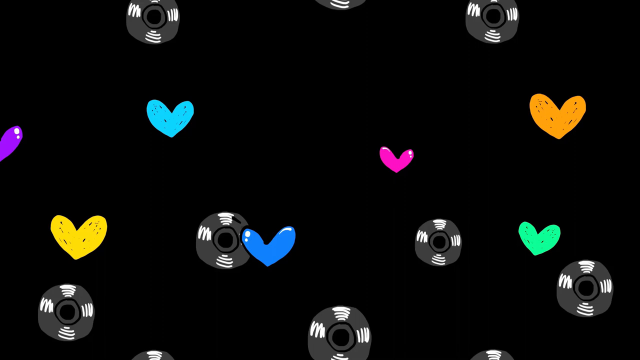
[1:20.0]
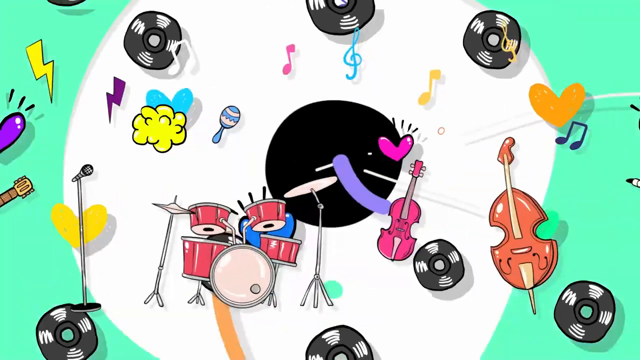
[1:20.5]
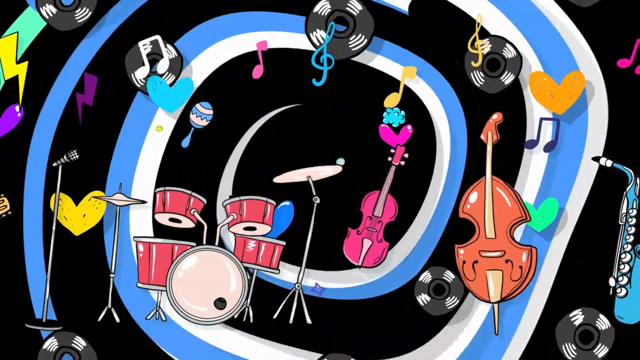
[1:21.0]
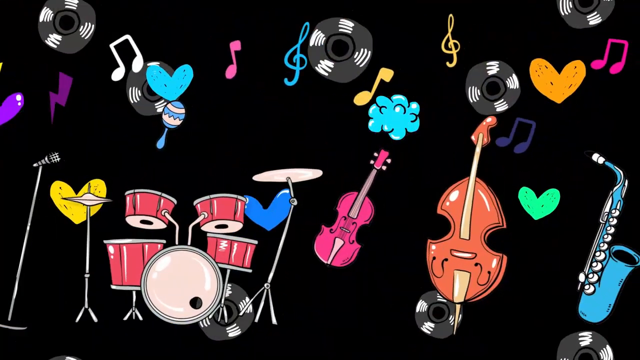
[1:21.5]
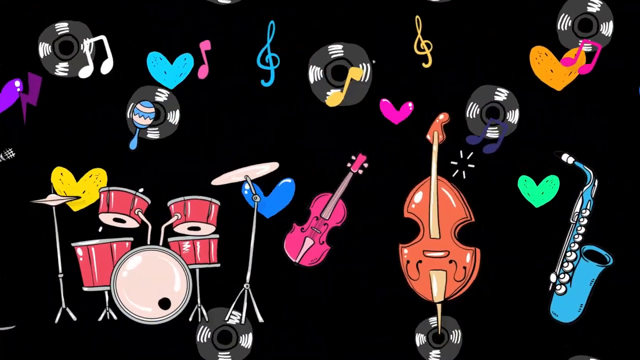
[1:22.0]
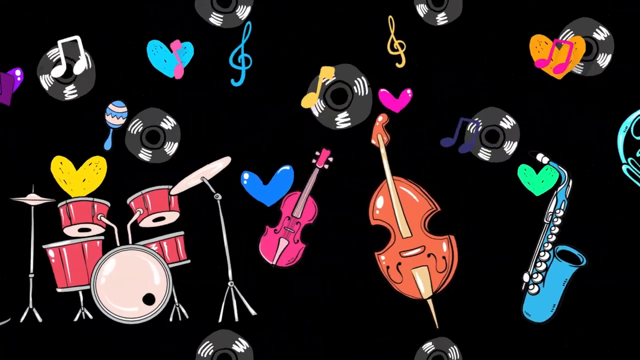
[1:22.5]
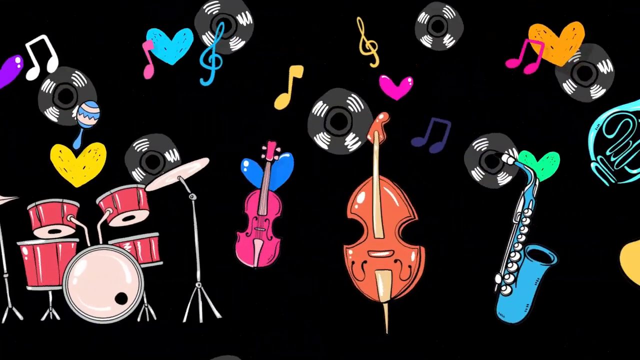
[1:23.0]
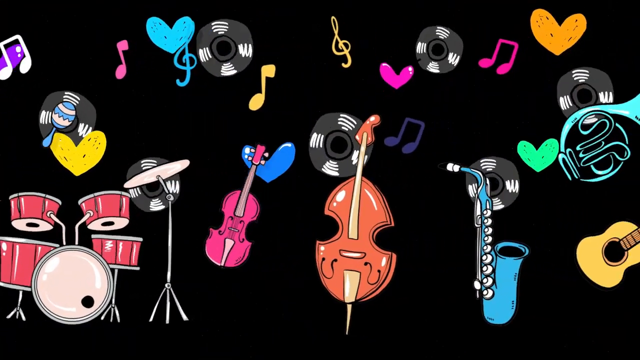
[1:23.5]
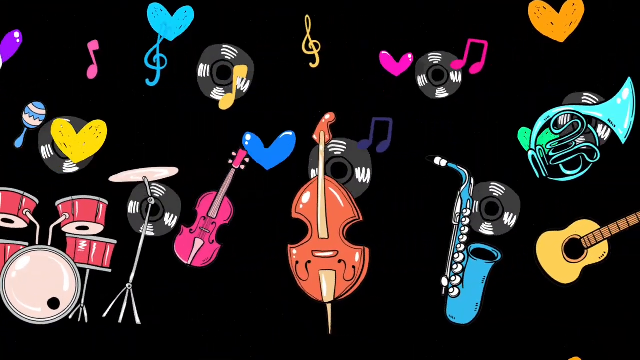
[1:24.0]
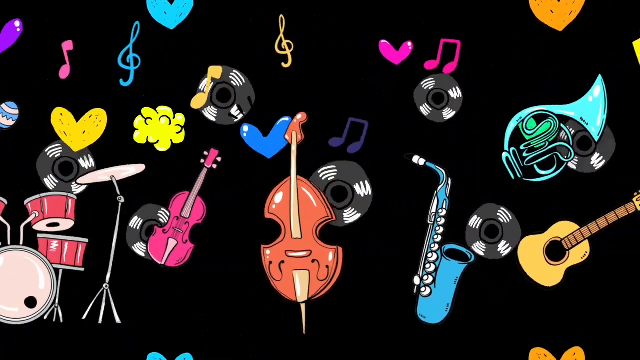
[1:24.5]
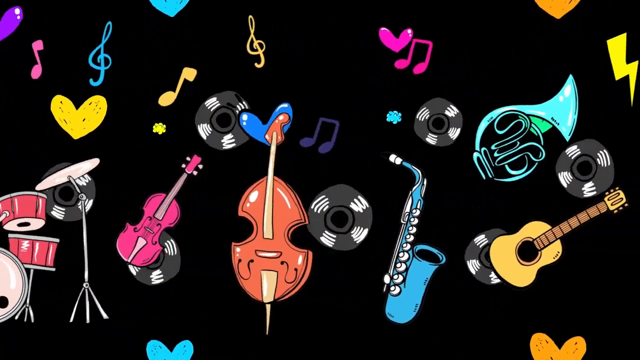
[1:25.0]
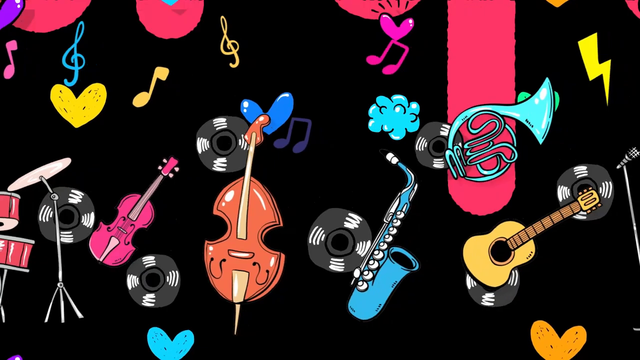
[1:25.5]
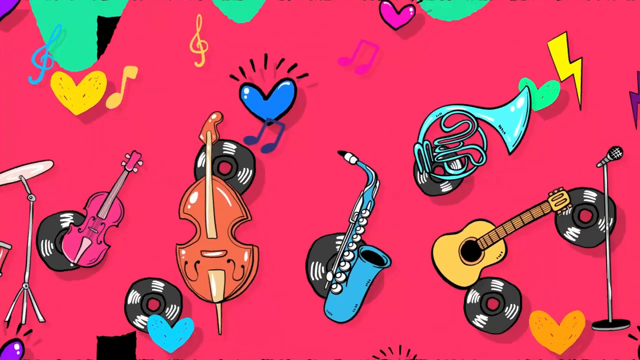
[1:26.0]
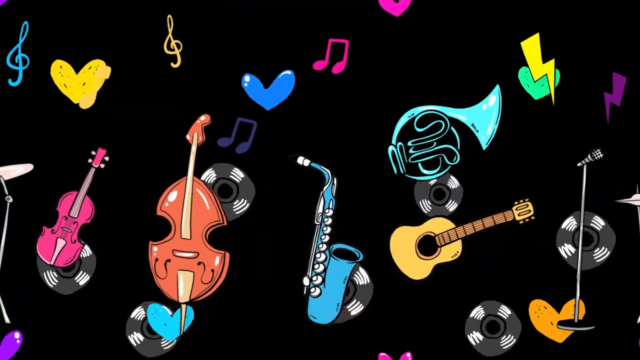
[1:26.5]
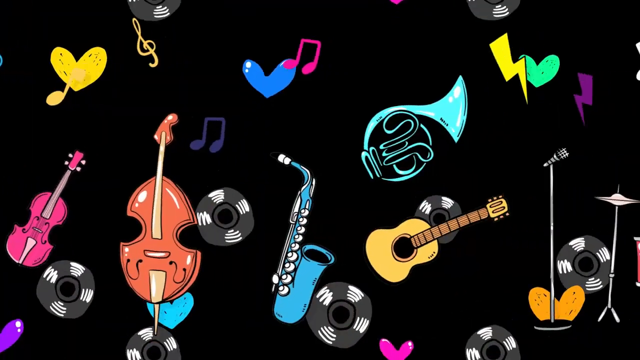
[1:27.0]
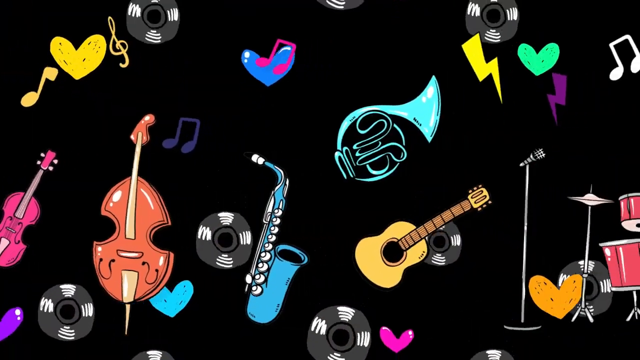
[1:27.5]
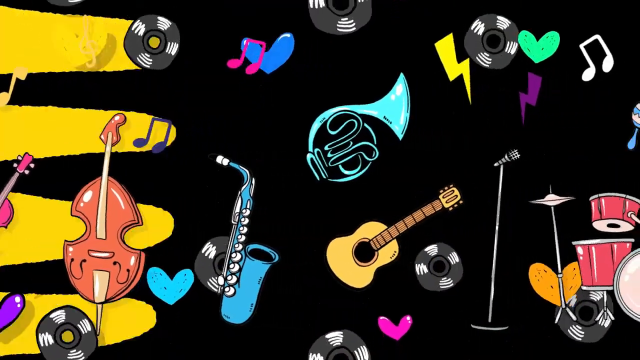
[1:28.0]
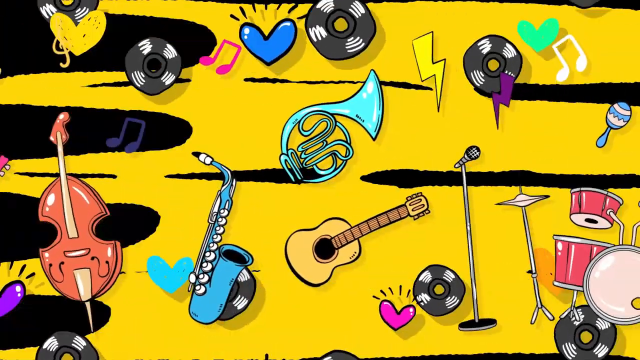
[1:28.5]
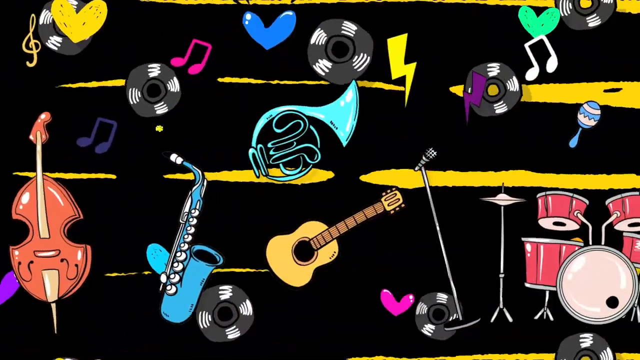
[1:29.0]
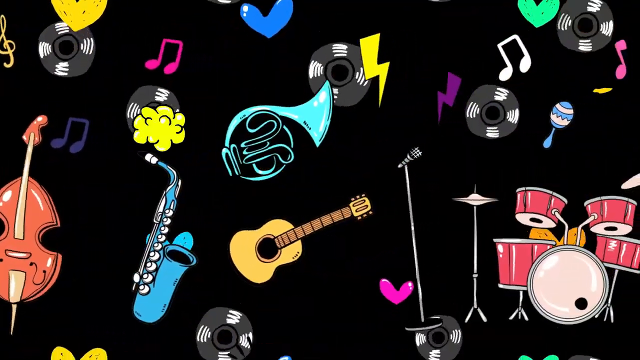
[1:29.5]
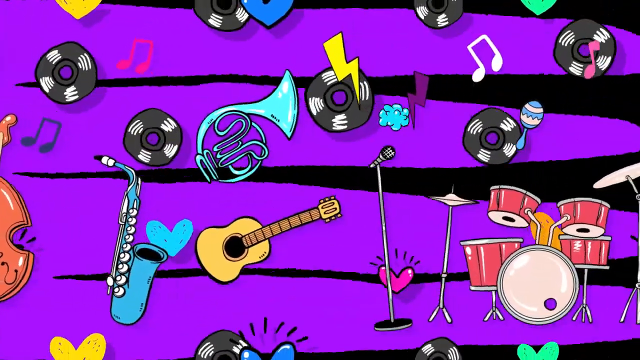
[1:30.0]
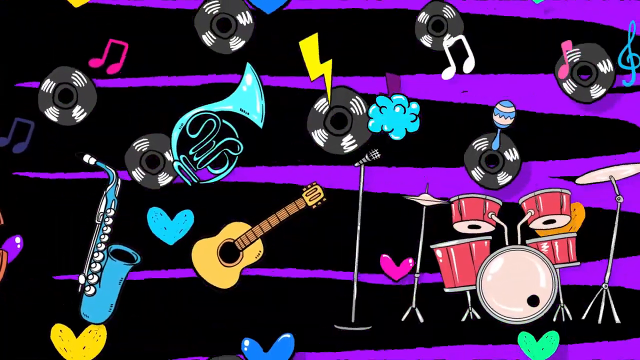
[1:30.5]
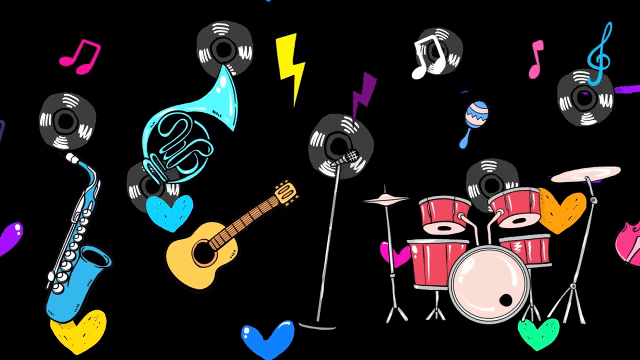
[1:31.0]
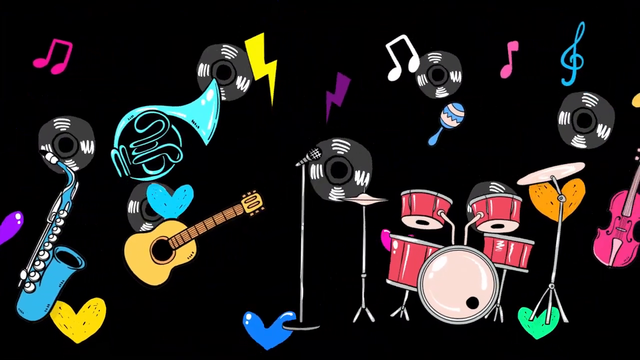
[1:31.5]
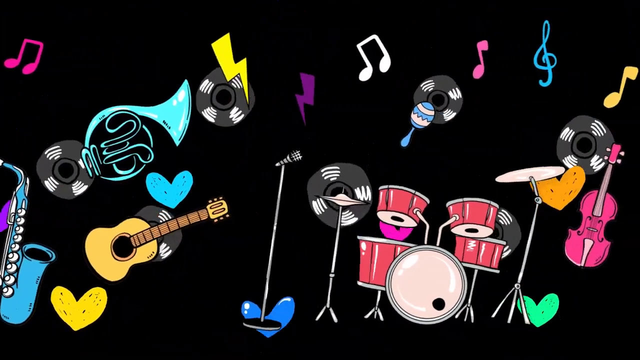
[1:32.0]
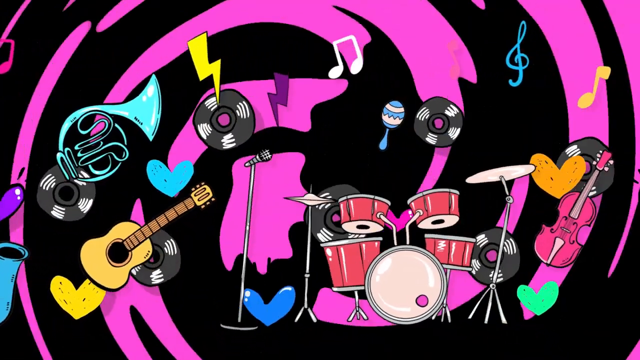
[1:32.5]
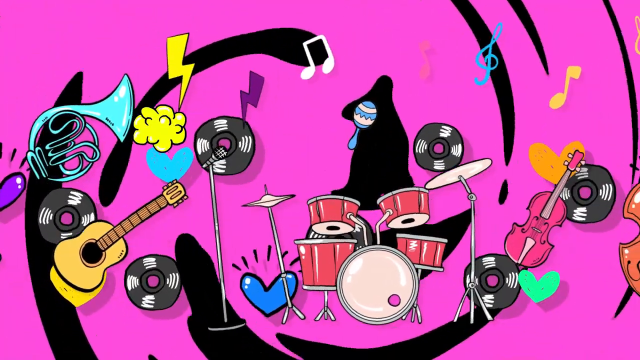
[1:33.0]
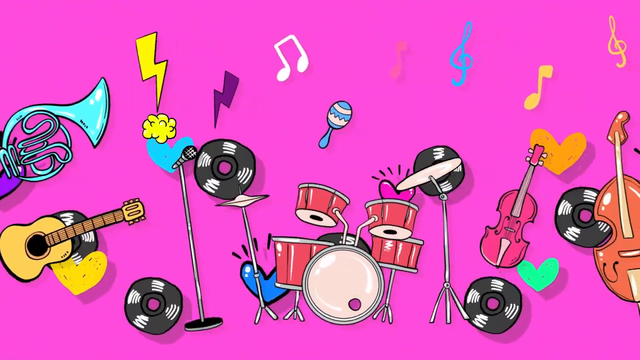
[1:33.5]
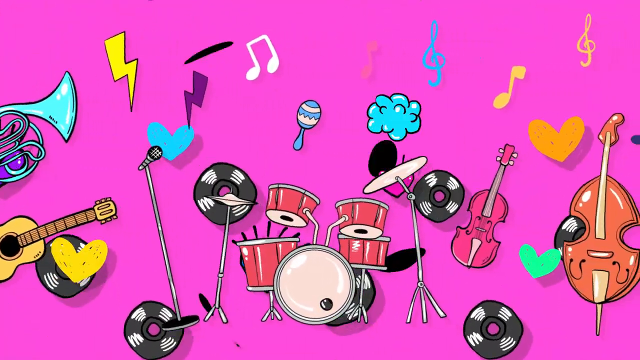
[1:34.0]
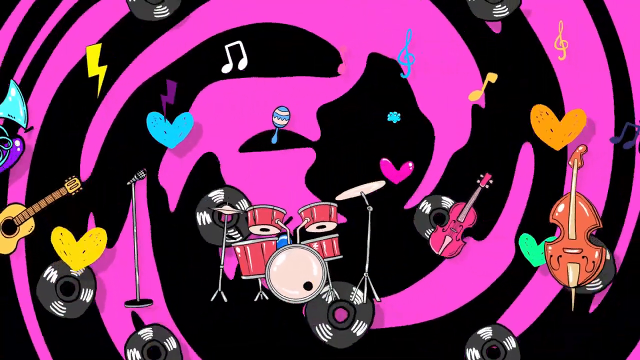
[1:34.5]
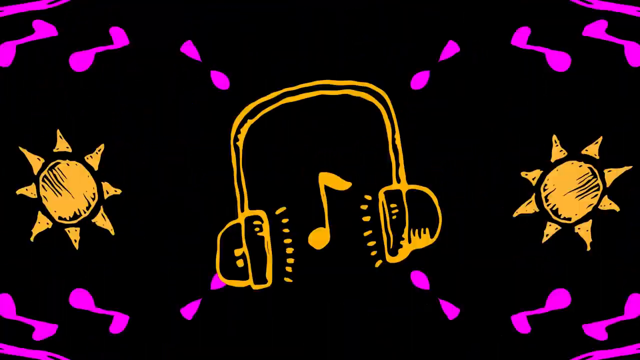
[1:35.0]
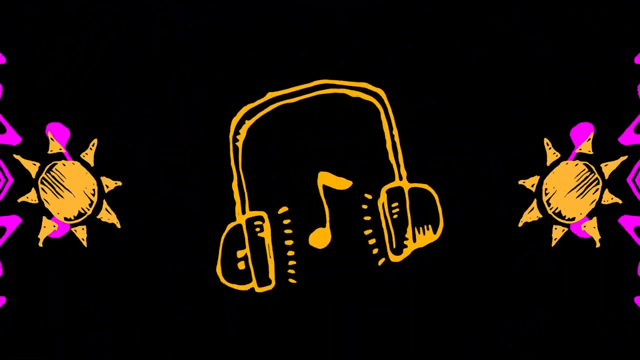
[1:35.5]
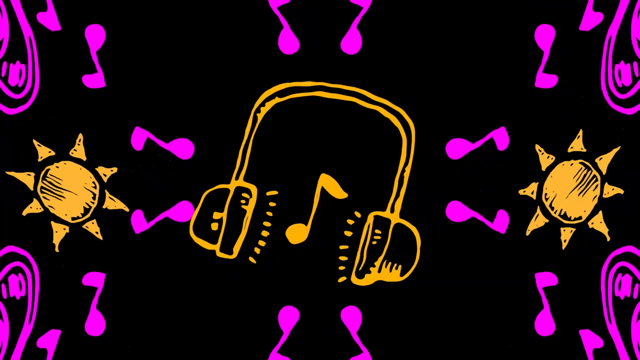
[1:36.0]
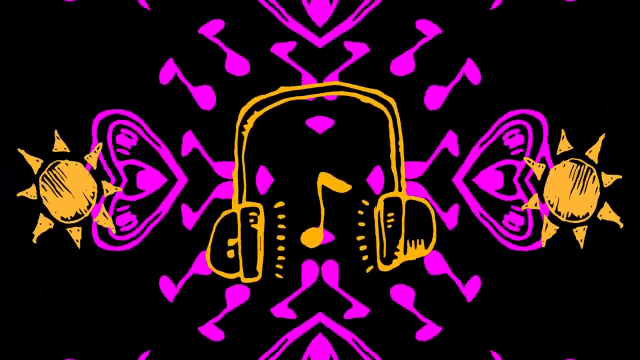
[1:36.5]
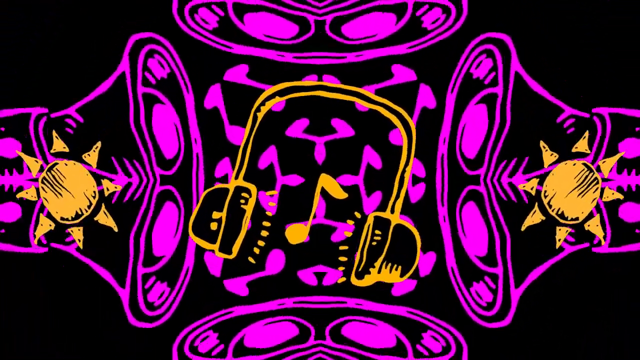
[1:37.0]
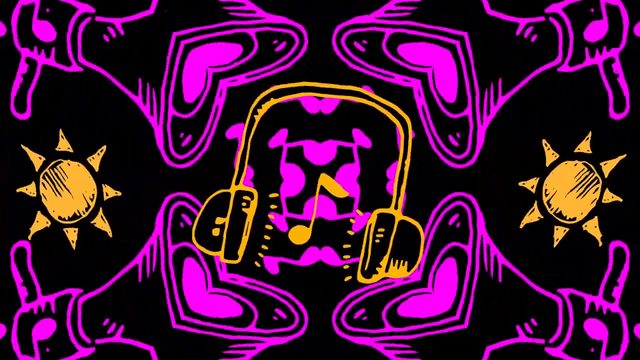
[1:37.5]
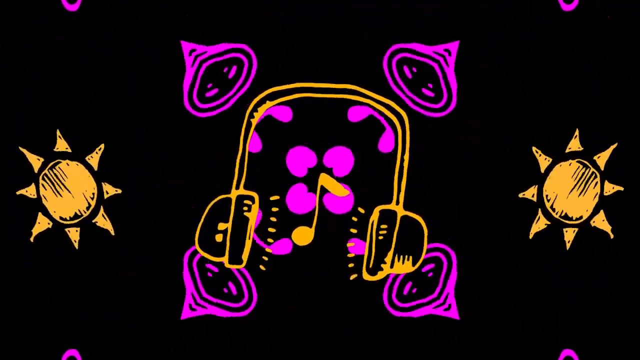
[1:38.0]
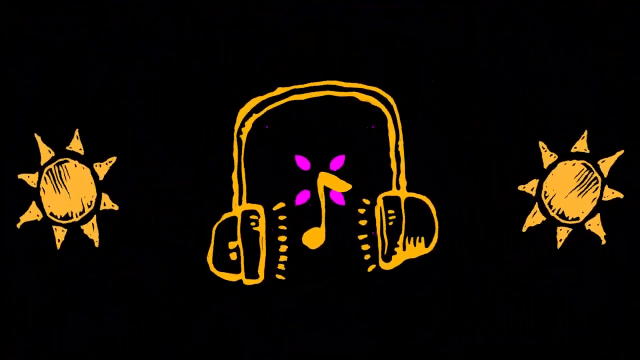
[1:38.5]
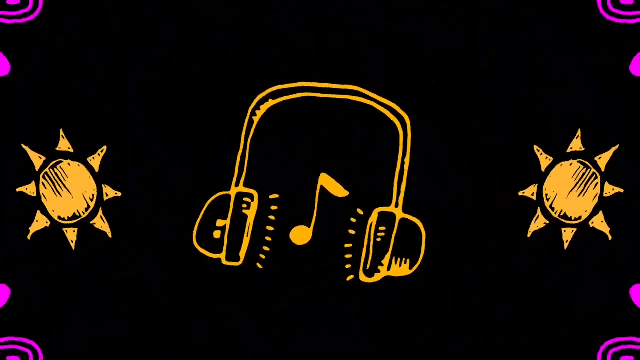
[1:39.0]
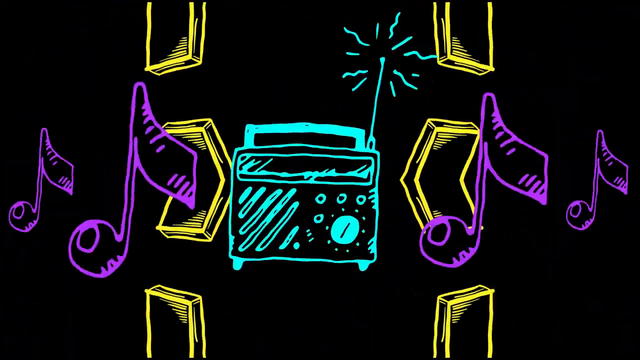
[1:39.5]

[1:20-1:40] The black screen with records and hearts appears, the records and hearts sort of floating in the background. Musical instruments then appear: a drum set, a microphone on a stand, a violin, apparently a cello, and a saxophone, all moving from the right to the left of the screen, followed by a trombone and a guitar. The sequence starts over with the microphone, drum set and violin, while the background changes colours and makes squiggles. Next comes a headset, or headphones, with a music note in the very center and little lines from each of the speakers showing sound coming out. There are two suns, one on each side of the headset, and in the background is an X shape made up of really large dots. Finally, an unidentified object, something like an oven, appears with music notes on each side of it.